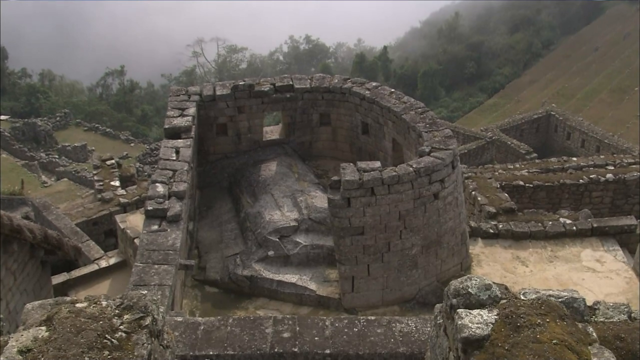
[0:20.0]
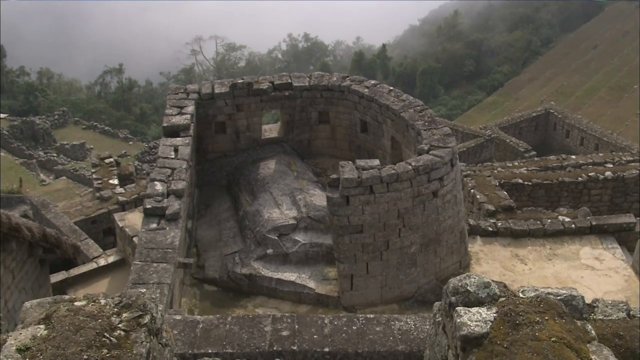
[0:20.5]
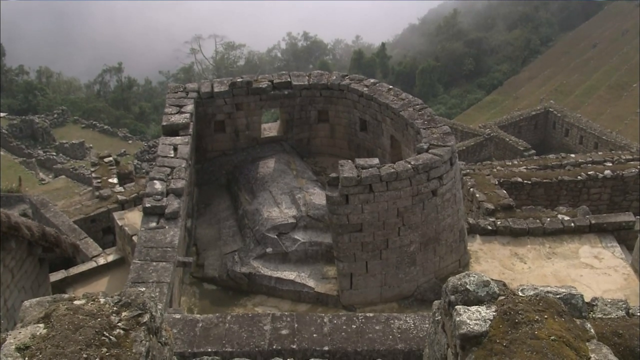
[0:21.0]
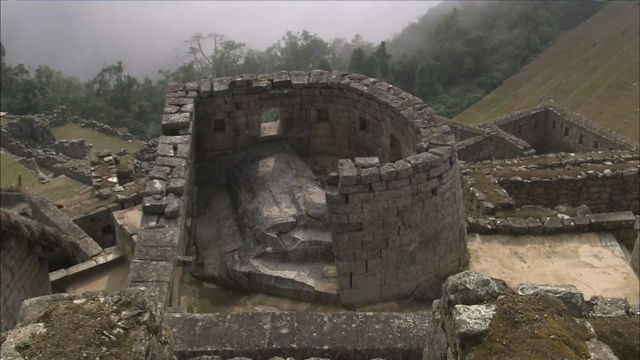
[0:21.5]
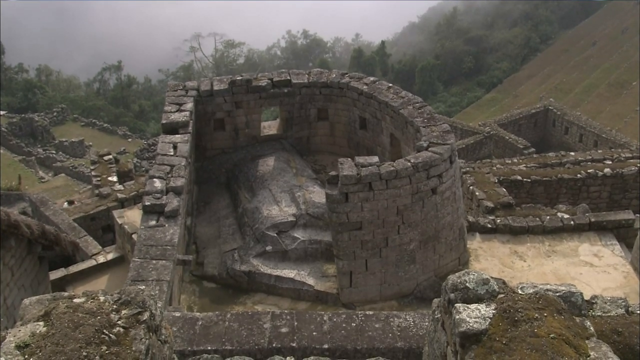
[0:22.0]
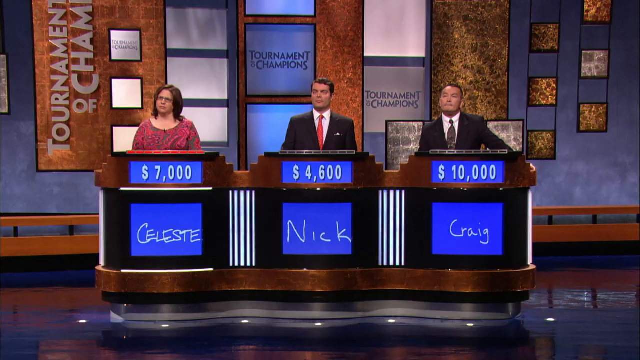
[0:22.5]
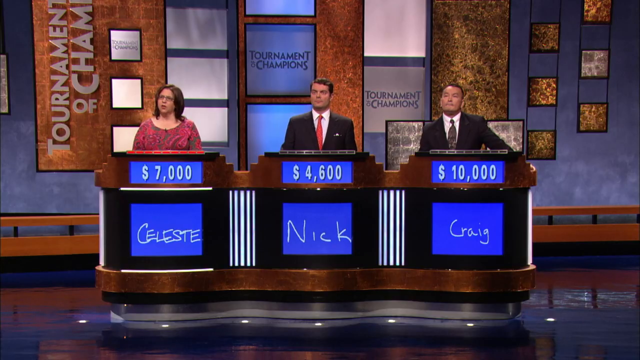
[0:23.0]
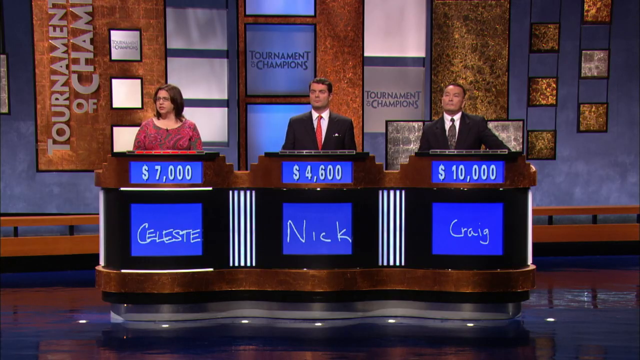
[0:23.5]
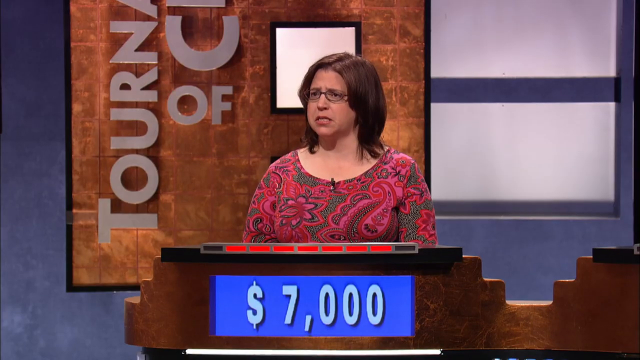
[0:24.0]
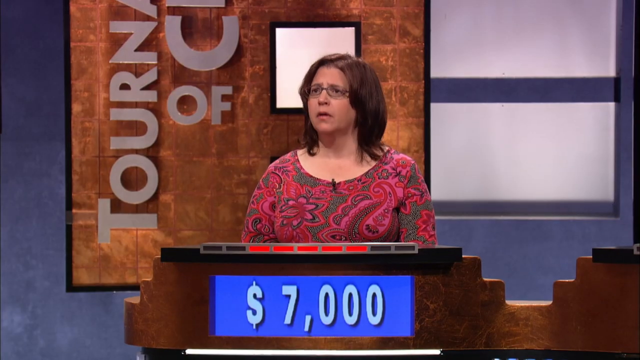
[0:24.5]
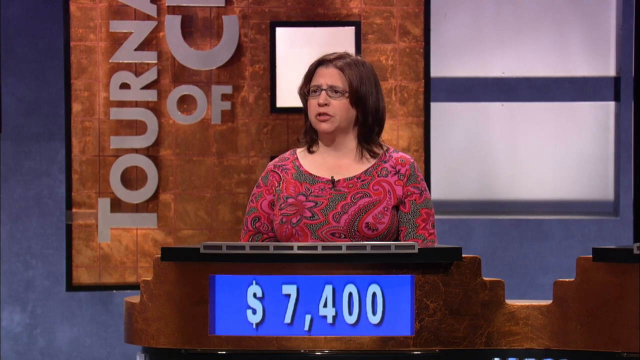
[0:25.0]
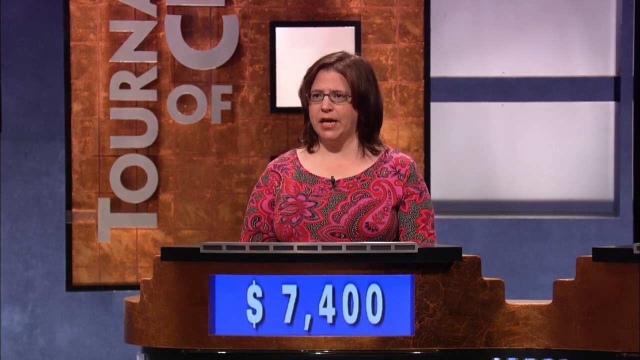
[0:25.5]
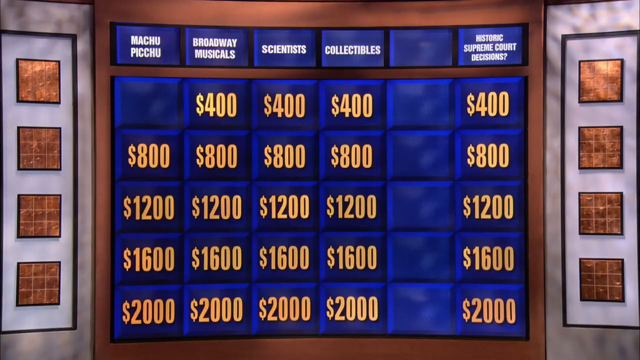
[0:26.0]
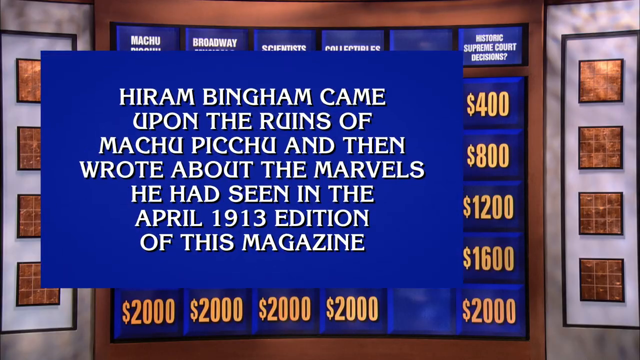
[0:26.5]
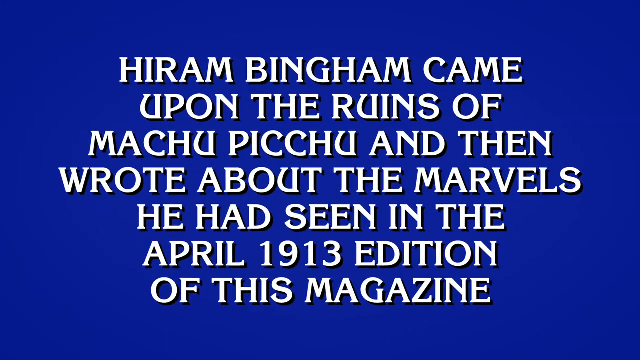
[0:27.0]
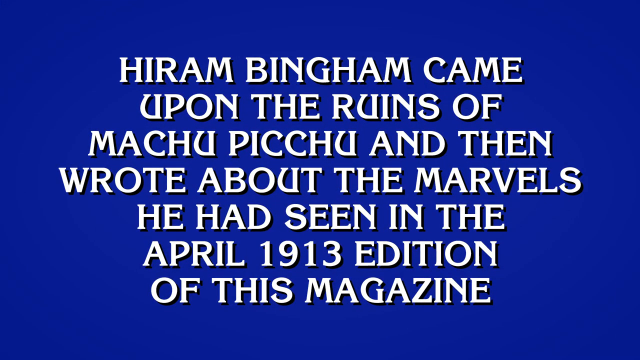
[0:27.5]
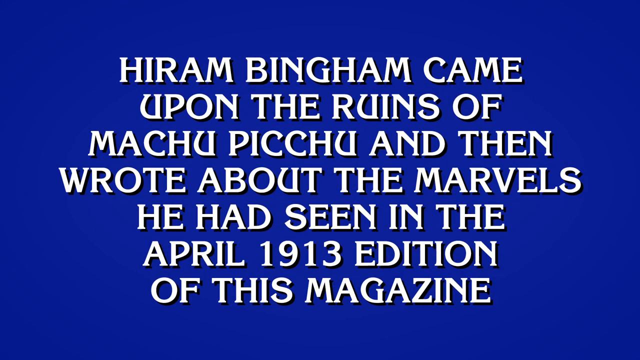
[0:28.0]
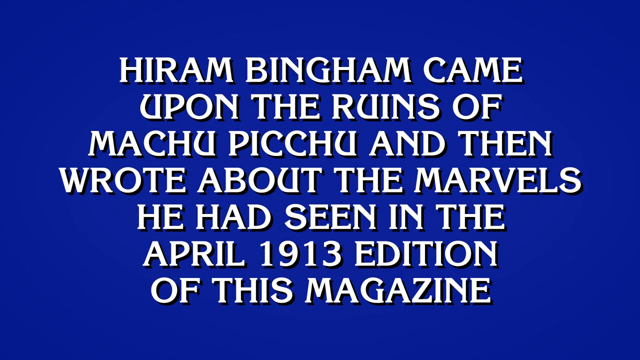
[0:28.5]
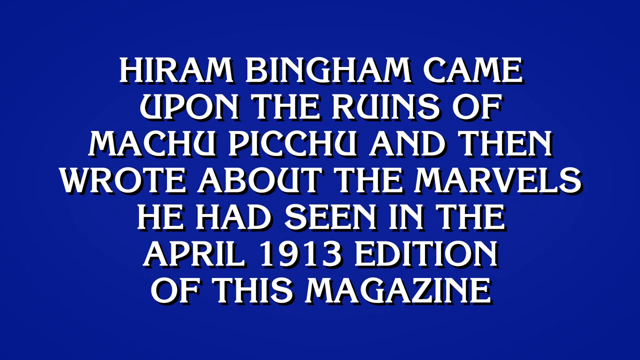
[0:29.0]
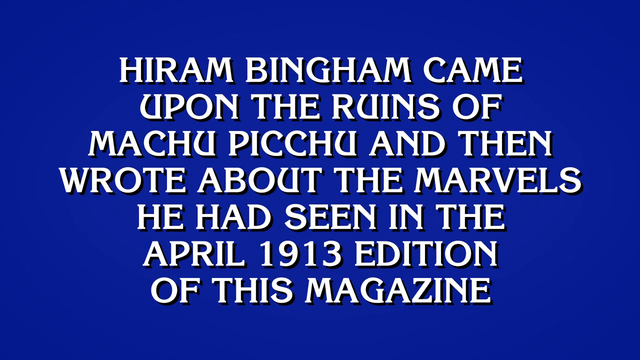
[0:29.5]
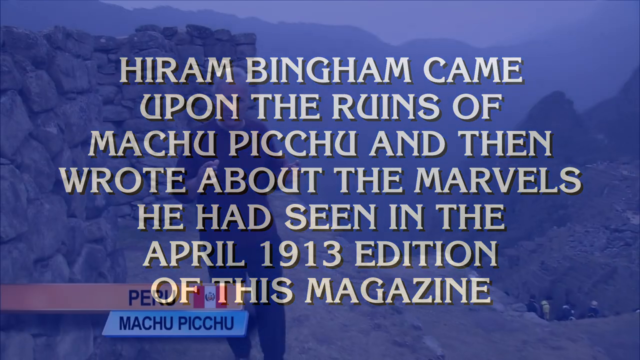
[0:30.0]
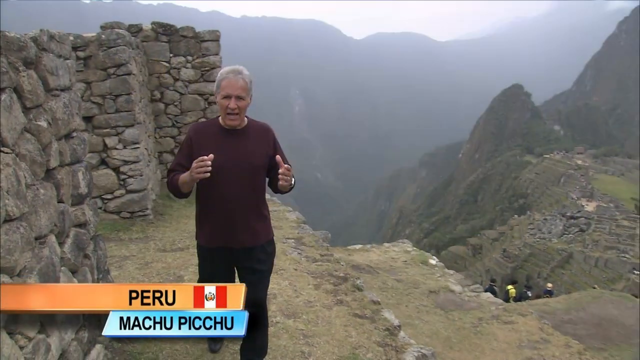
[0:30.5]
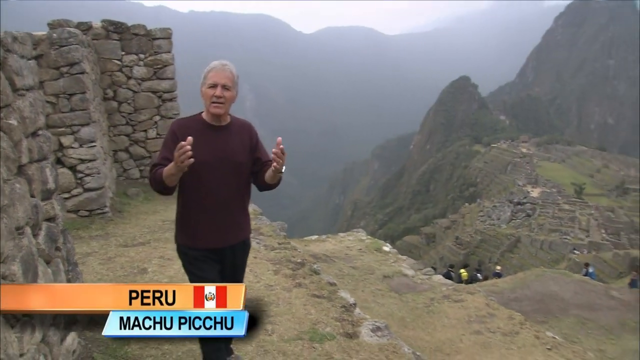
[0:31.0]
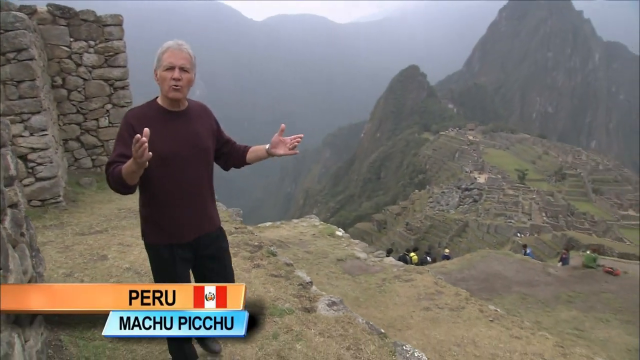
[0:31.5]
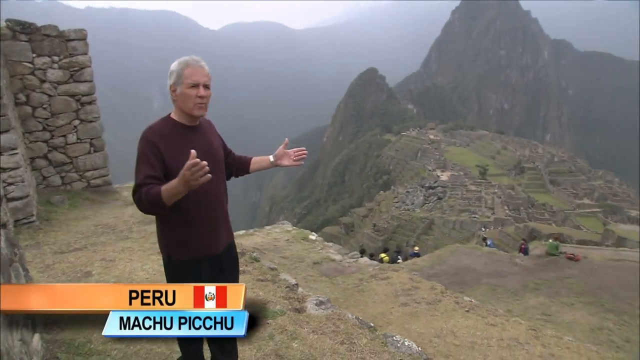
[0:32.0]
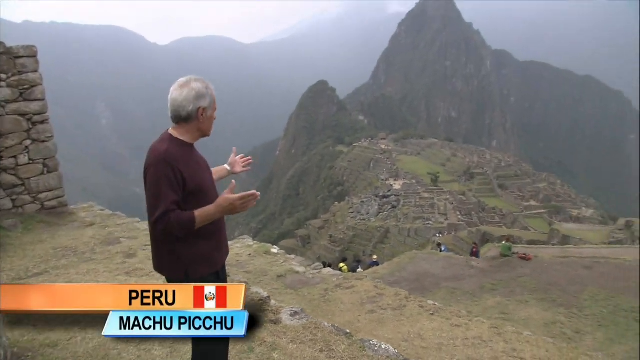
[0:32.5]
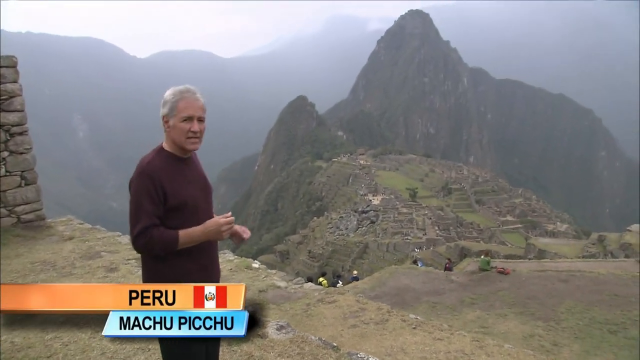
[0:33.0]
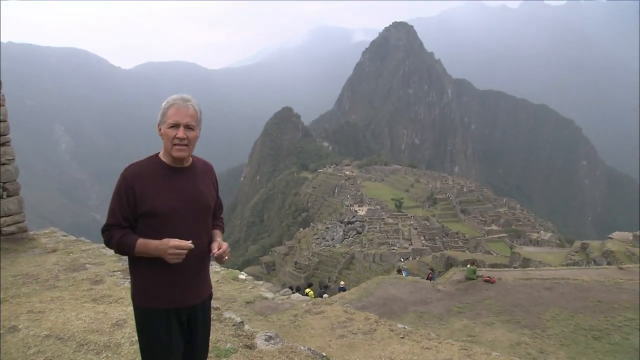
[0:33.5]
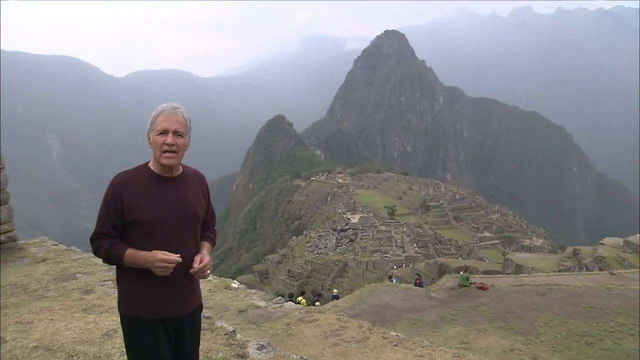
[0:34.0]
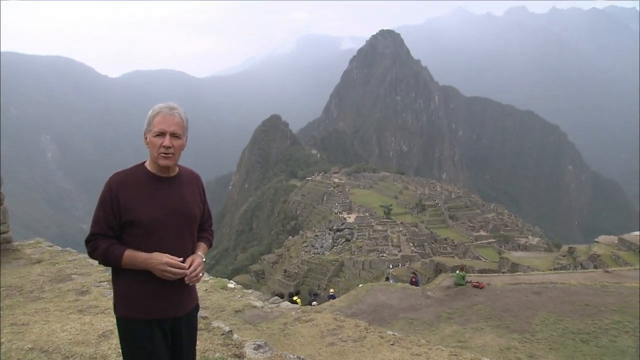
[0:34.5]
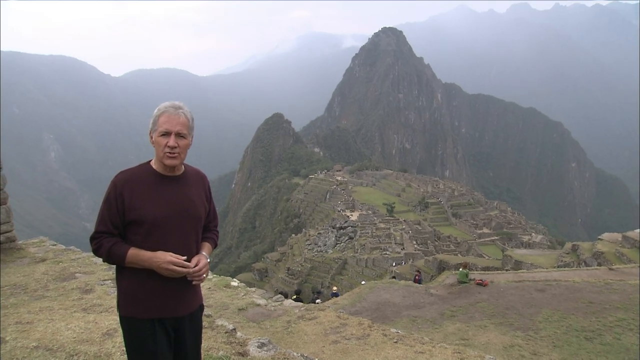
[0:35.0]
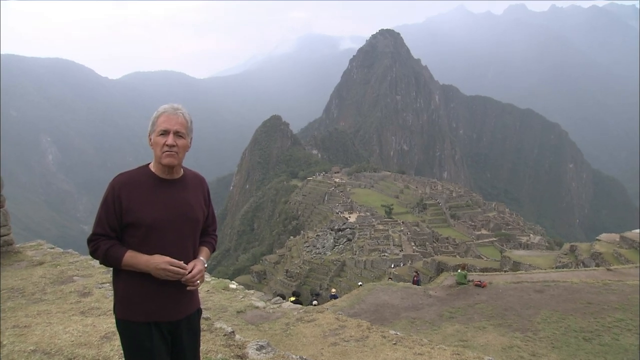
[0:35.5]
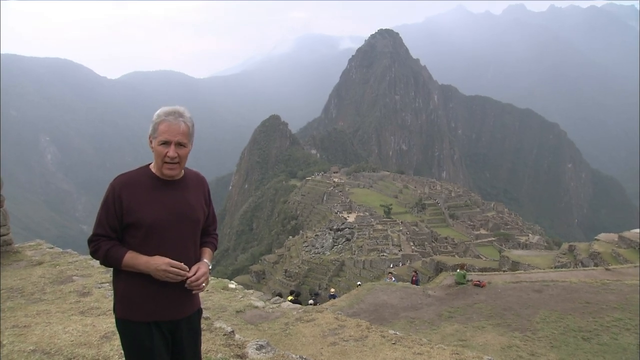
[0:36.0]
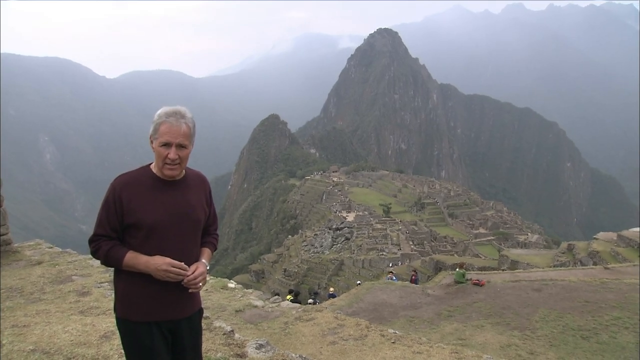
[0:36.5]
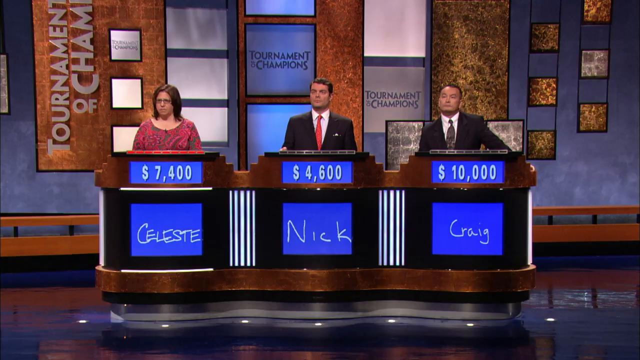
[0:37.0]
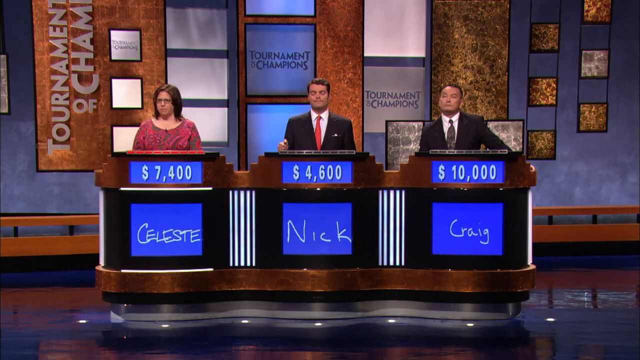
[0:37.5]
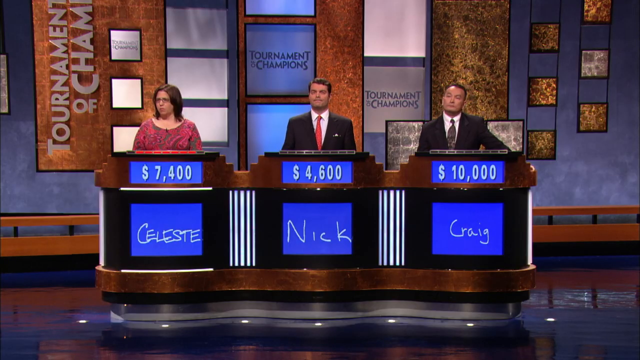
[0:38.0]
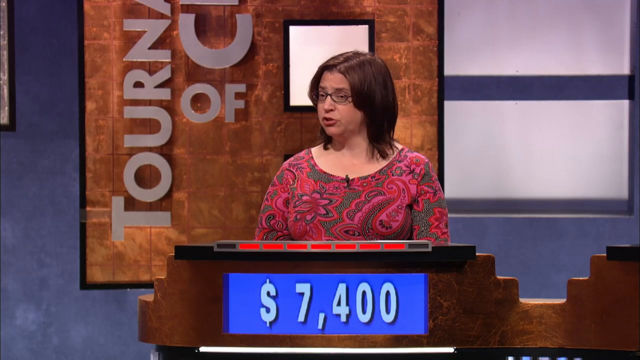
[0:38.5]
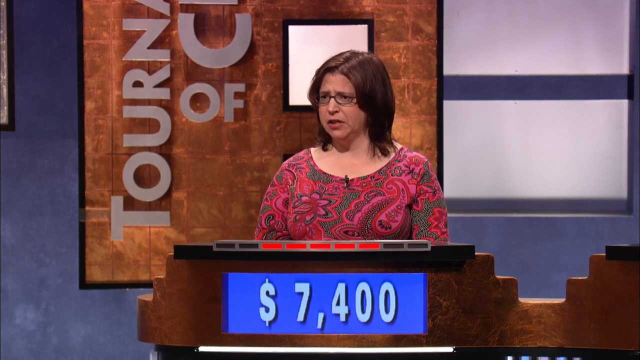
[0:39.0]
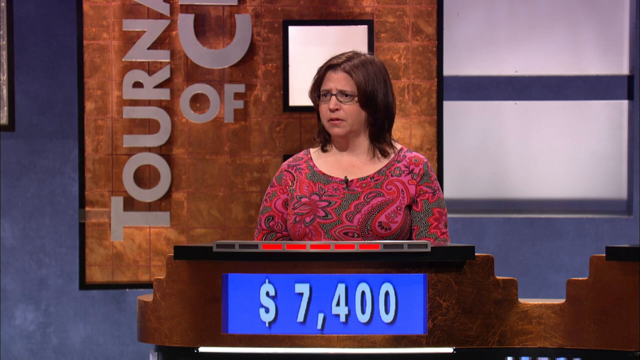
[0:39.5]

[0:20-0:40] The view of Peru continues, showing a wall on the left. The top of the wall starts out all together, then has odds-and-ends pieces kind of crumbling, goes out a little, and rounds into almost a semicircle. There is an opening about three feet from the left end of the wall, roughly in the middle, plus smaller ones that look like they are not open. Below is a kind of step down with some grasses. The contestant answers as the time meter goes down; each second, one of the little red sections disappears from the left or right side. She gets it right and her total goes up by 400. She moves on to the next question in the category, worth a bit more. Alex Trebek is shown again with his arms out. Some people are below, a few steps down to the left, walking through the area. The view shows the steps curving down and around. Much of the site is broken down, with a lot of rubble. In the middle are grassy steps, then a smaller sloped point and valley that recedes and then rises high into the sky.